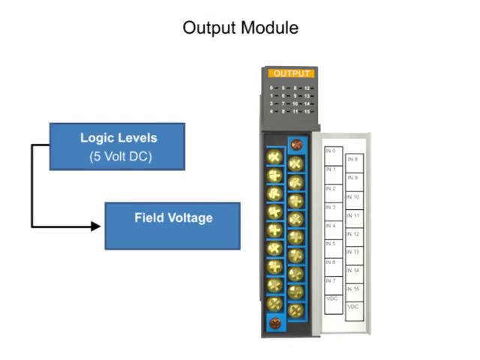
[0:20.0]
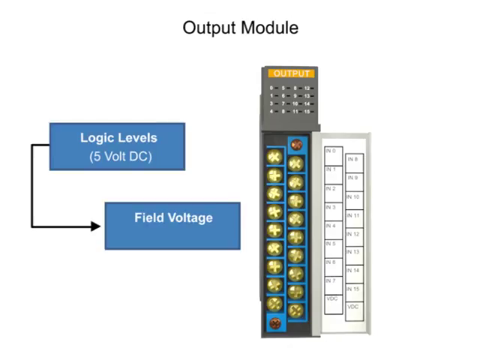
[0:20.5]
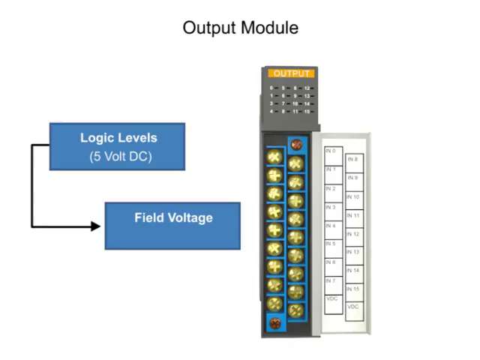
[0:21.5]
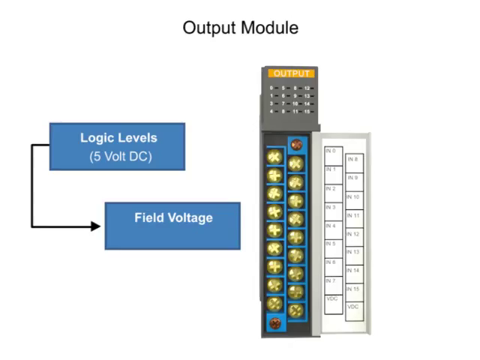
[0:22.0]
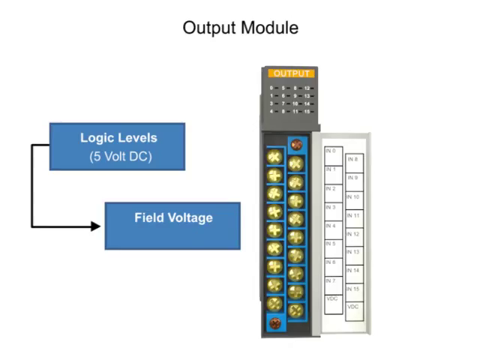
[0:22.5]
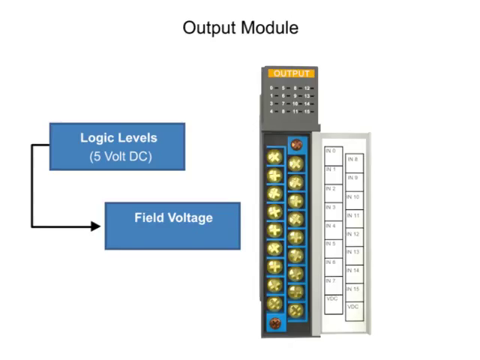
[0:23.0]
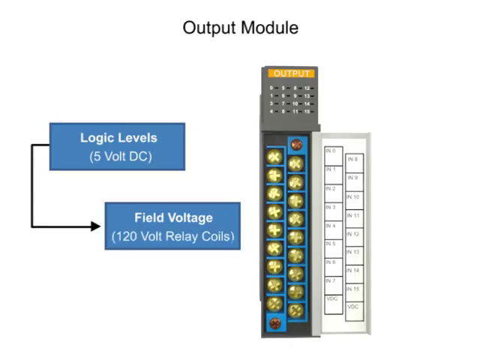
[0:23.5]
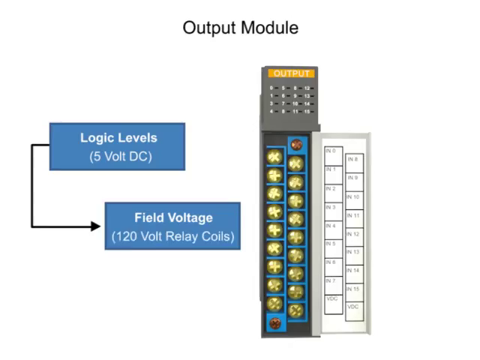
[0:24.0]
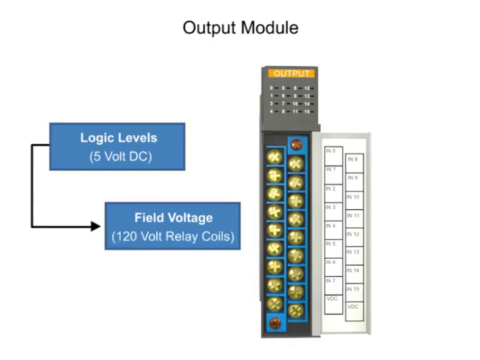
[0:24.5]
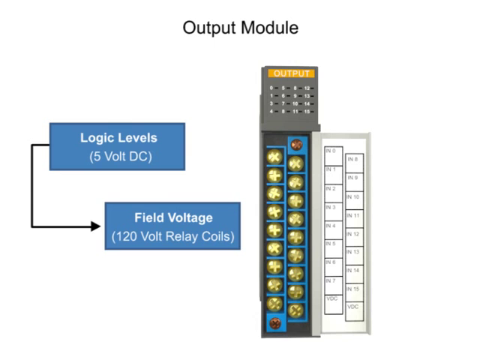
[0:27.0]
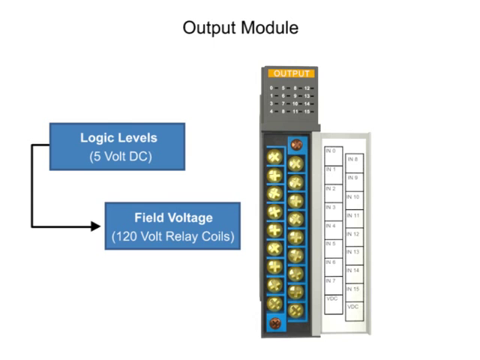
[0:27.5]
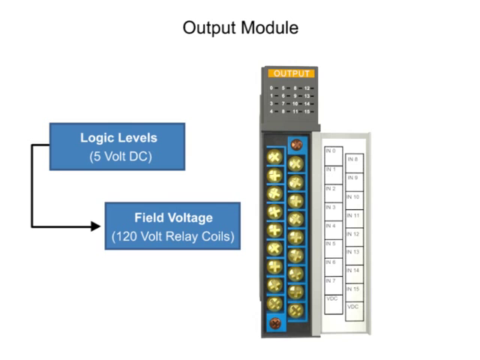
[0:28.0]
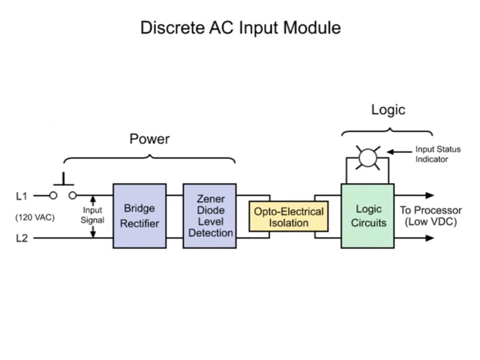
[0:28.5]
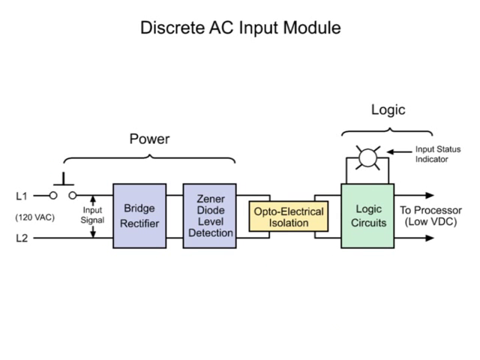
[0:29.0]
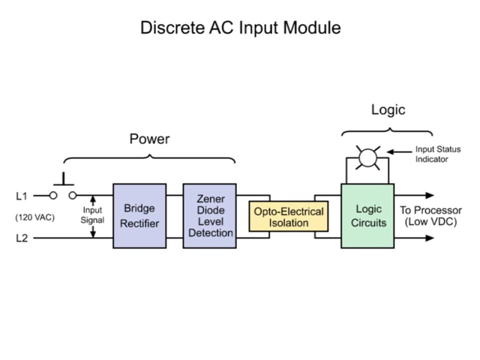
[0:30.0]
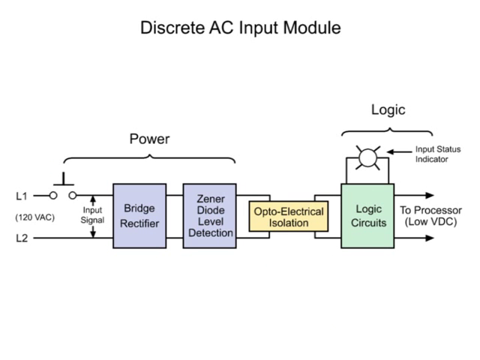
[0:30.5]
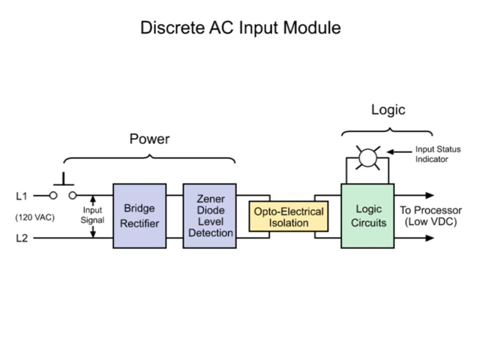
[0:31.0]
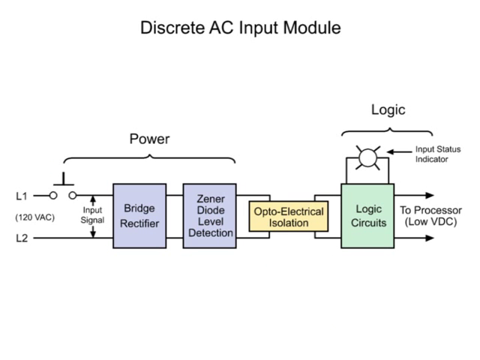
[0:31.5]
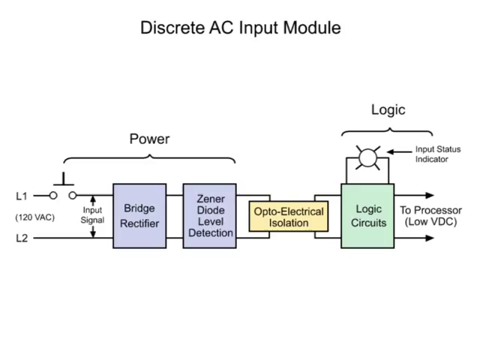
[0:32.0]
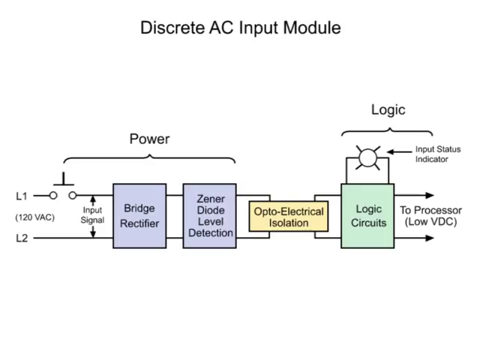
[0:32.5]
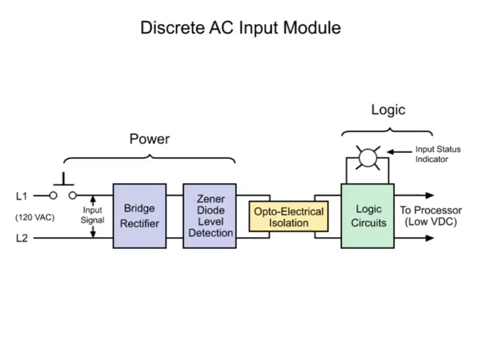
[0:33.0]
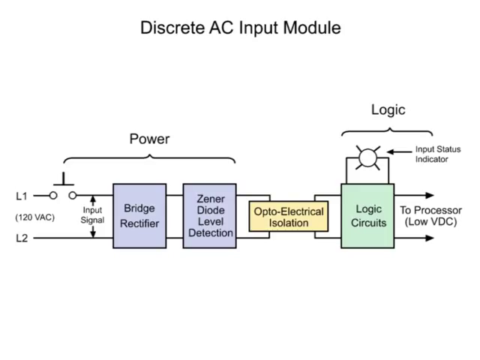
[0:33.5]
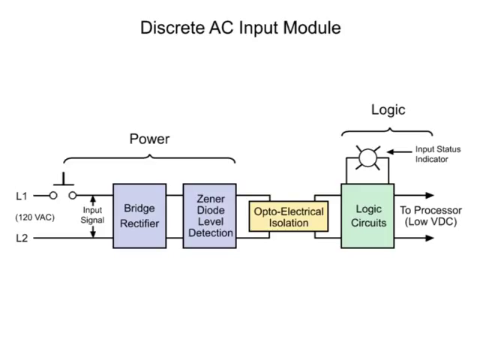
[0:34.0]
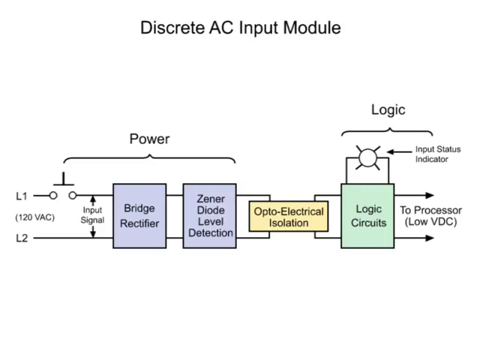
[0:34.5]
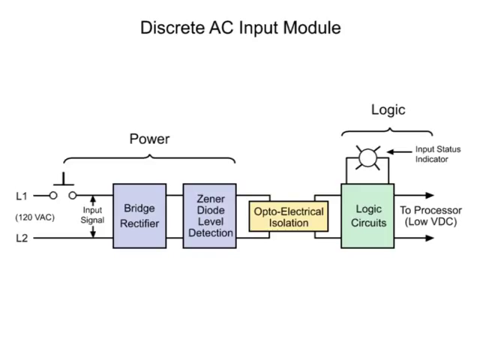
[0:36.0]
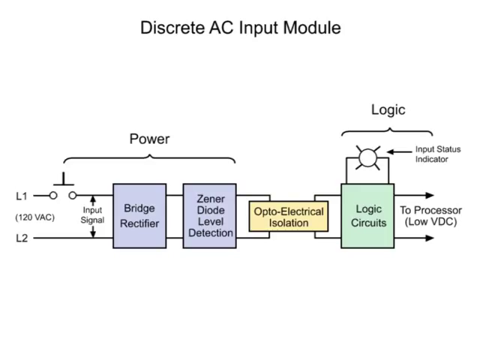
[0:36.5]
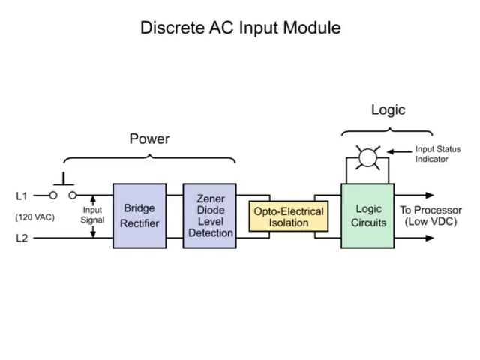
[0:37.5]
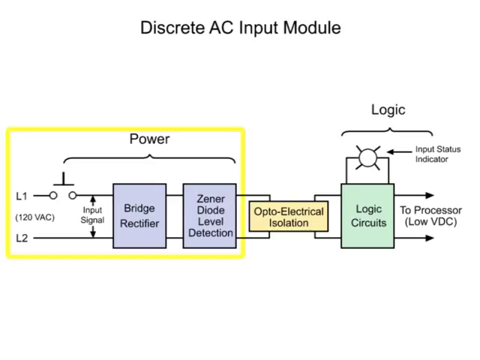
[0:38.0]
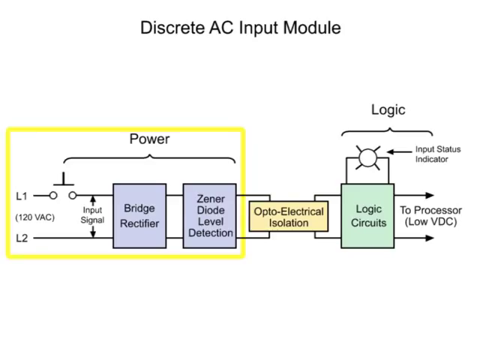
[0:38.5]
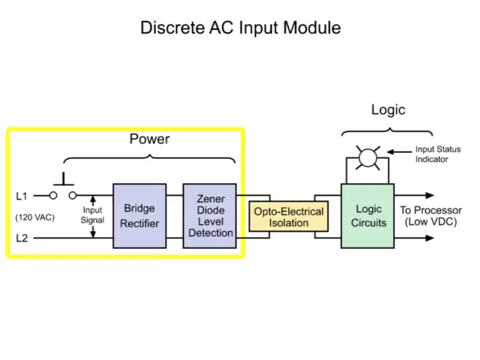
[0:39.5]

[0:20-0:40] The breakdown of the input module is now divided into power and logic. Under power there is a voltage of 120 VAC, an input signal, a bridge rectifier and Zener diode level detection. Optoelectrical isolation forms a bridge separating power from logic. Under logic there is an input status indicator and logic circuits, with an arrow pointing to the processor labeled low Vdc, an incoming arrow showing the input status indicator, and two arrows leaving the logic circuits. The power section is highlighted. Live 1 and live 2 are shown bringing current in. All the details can be clearly read on screen.